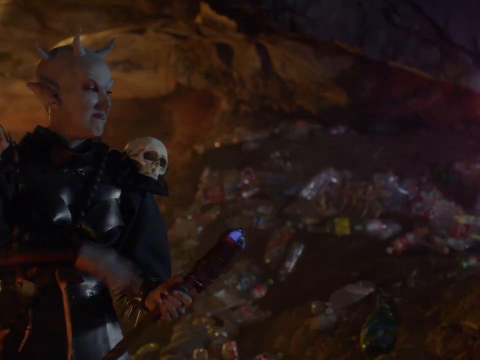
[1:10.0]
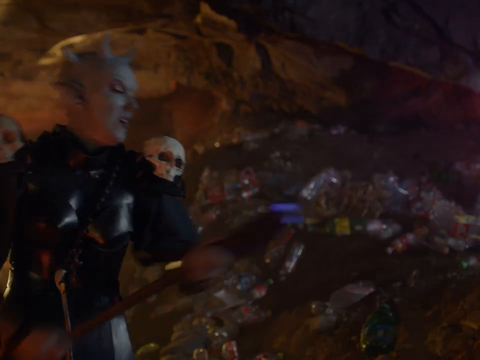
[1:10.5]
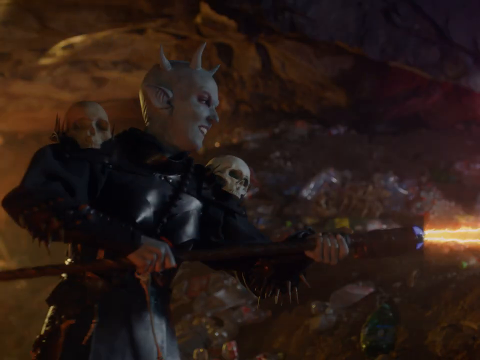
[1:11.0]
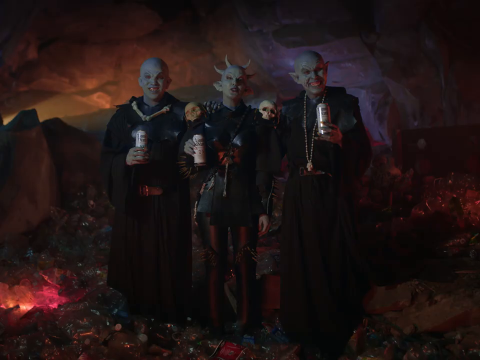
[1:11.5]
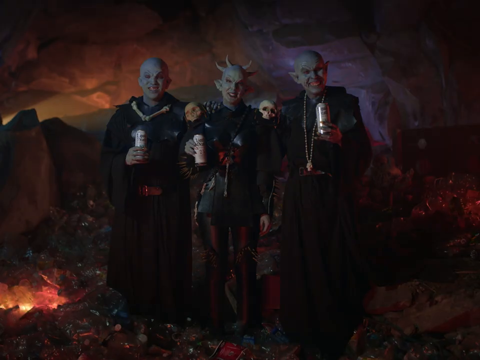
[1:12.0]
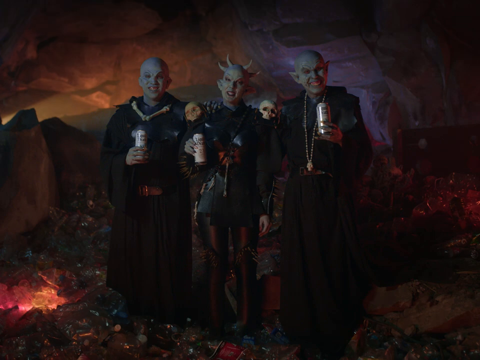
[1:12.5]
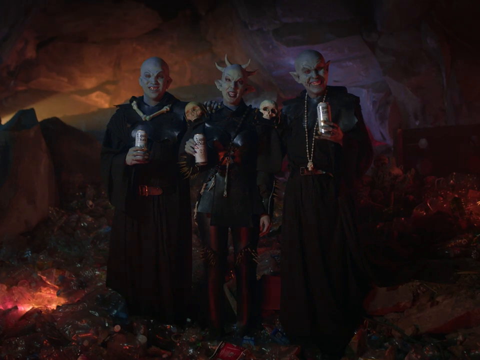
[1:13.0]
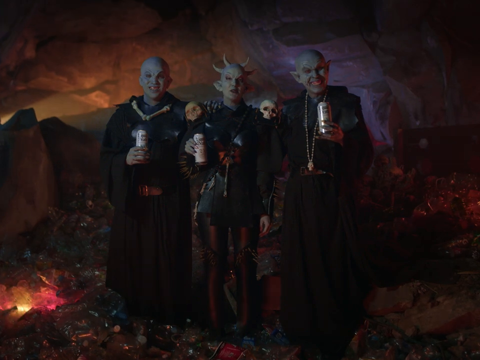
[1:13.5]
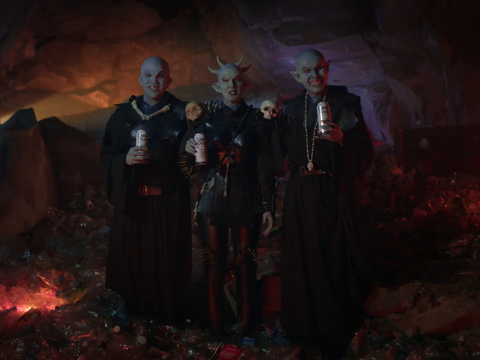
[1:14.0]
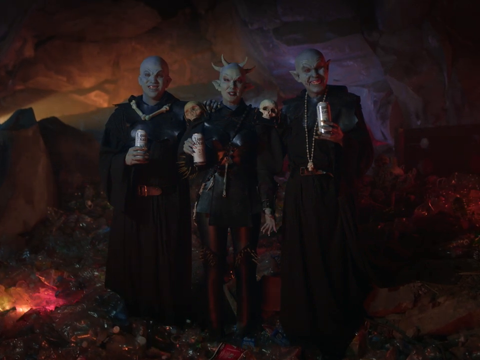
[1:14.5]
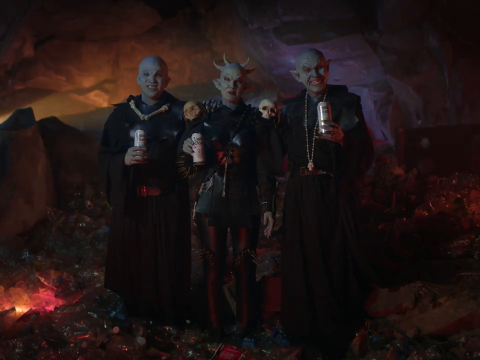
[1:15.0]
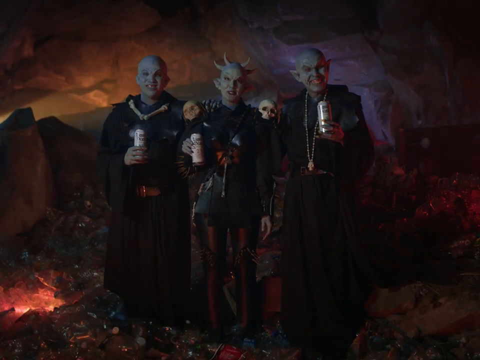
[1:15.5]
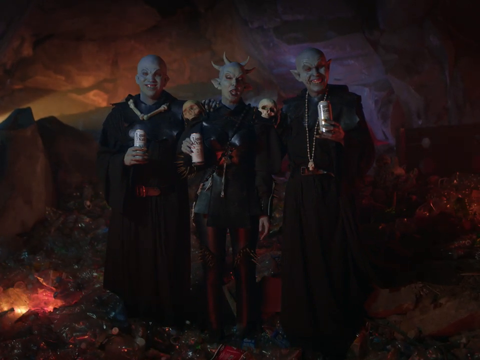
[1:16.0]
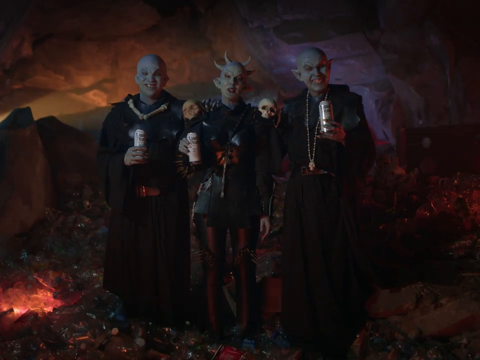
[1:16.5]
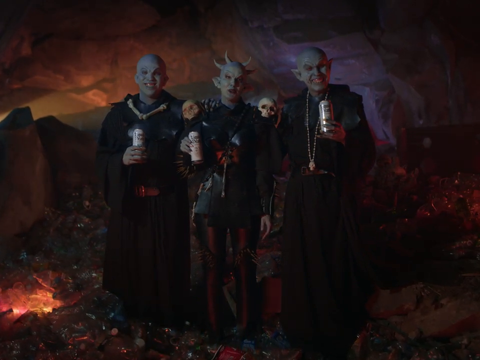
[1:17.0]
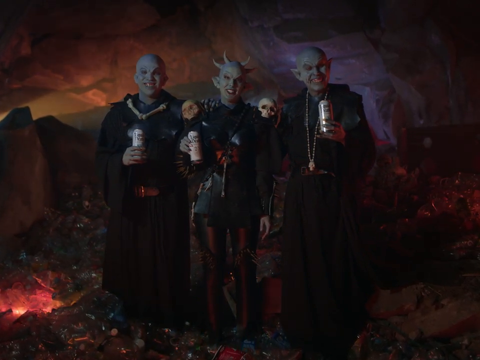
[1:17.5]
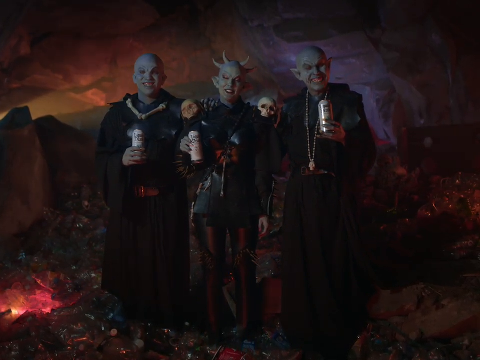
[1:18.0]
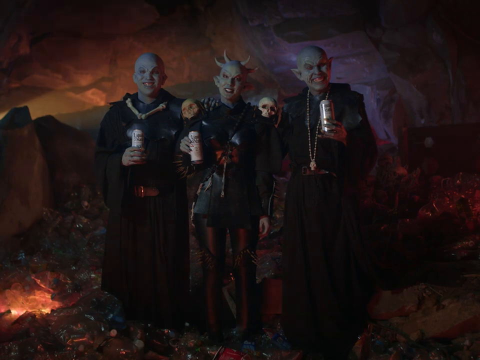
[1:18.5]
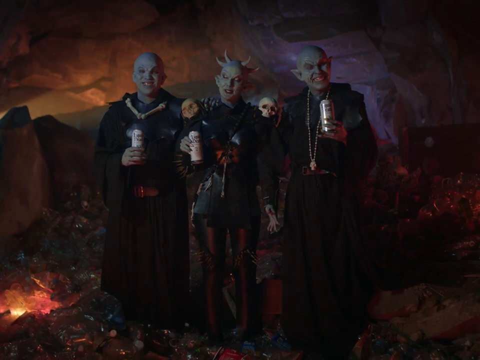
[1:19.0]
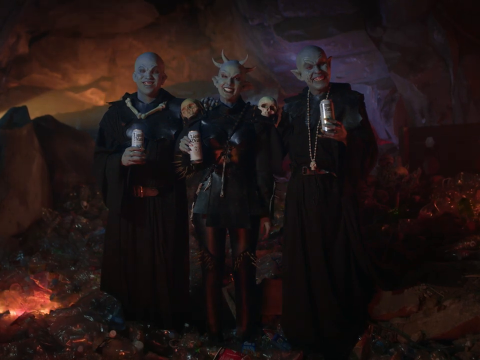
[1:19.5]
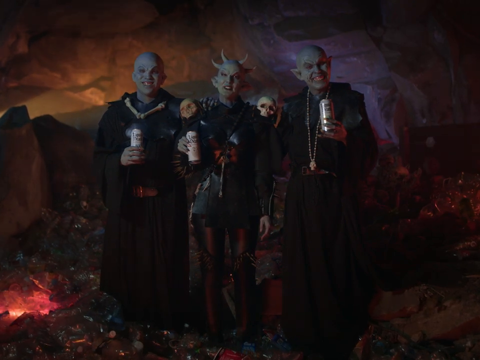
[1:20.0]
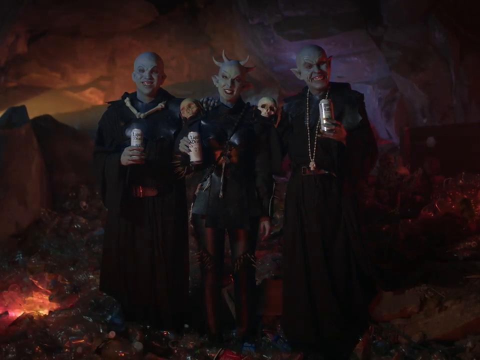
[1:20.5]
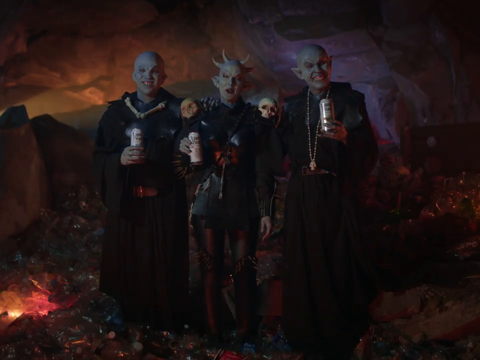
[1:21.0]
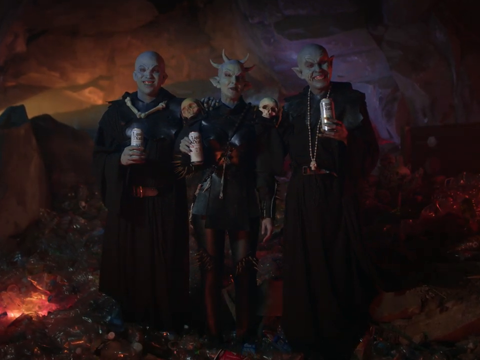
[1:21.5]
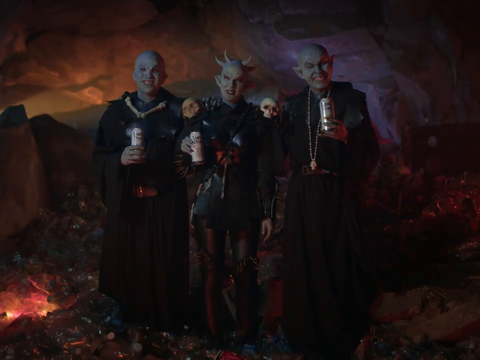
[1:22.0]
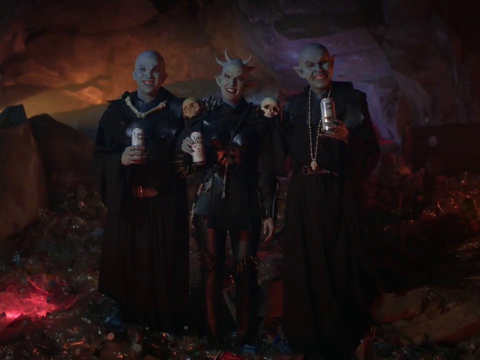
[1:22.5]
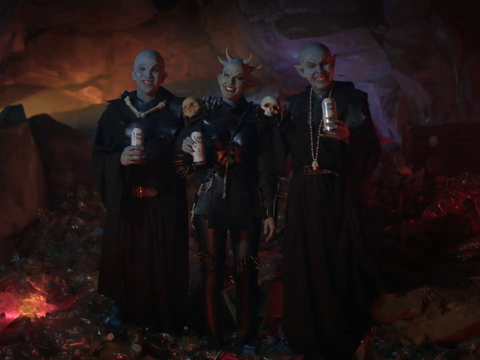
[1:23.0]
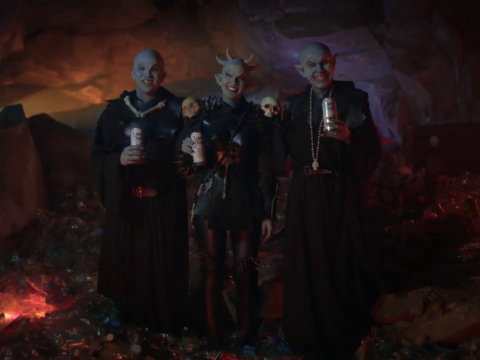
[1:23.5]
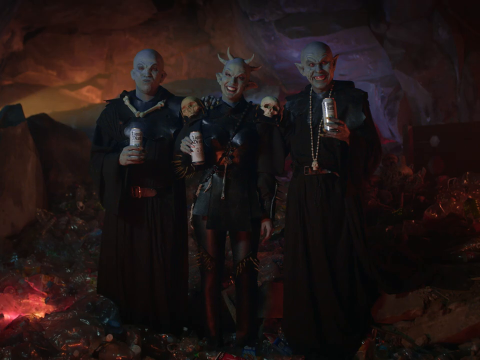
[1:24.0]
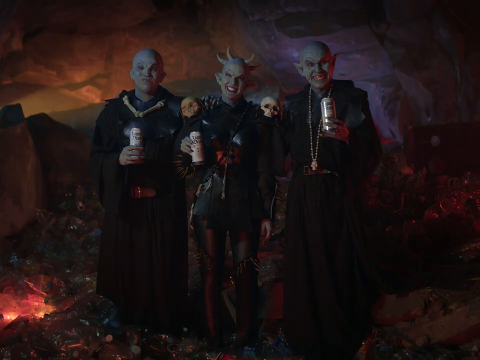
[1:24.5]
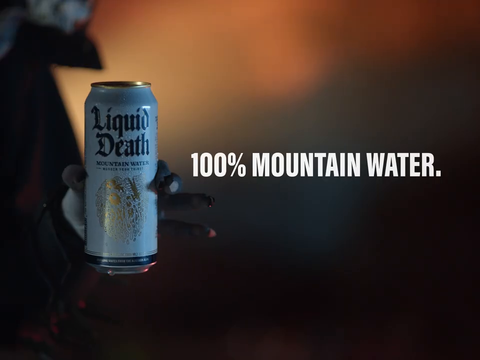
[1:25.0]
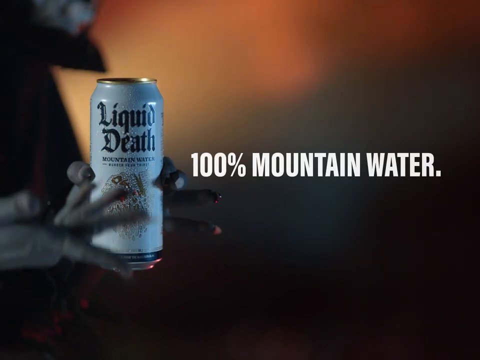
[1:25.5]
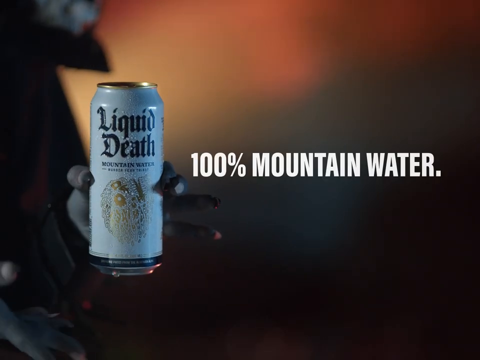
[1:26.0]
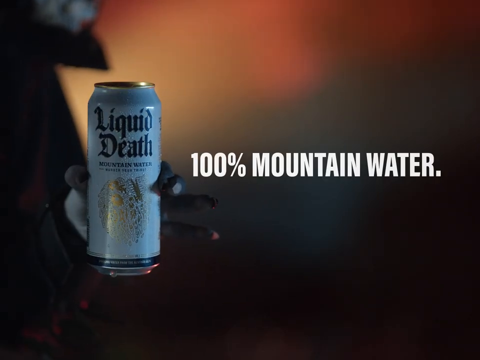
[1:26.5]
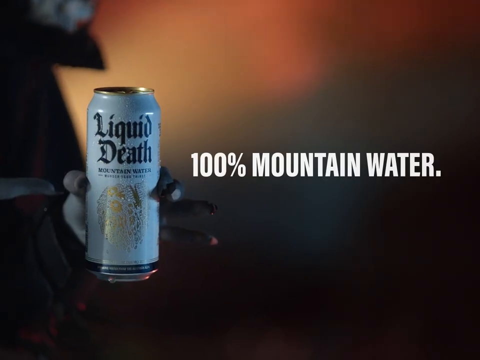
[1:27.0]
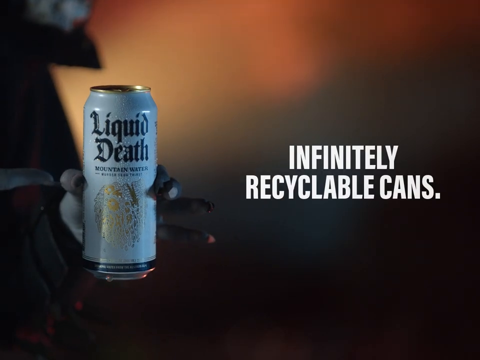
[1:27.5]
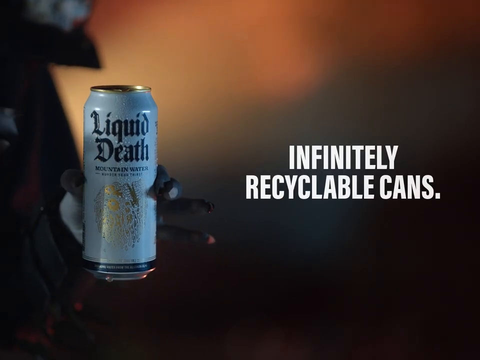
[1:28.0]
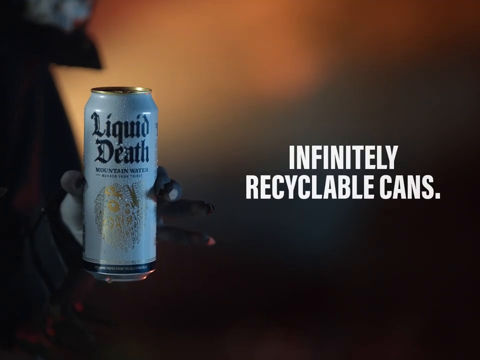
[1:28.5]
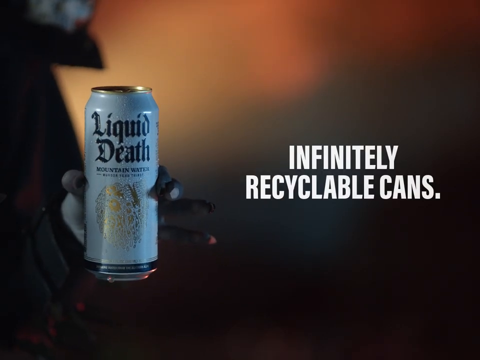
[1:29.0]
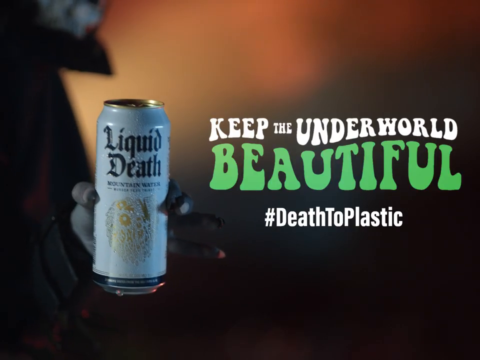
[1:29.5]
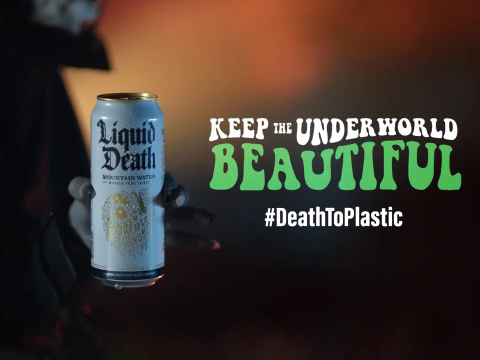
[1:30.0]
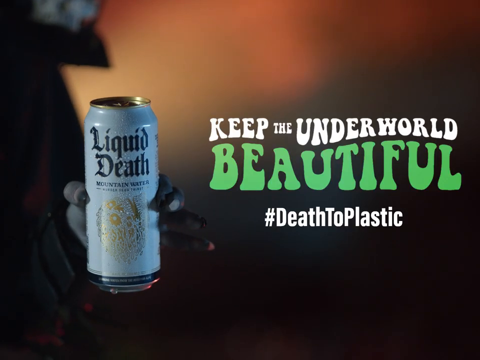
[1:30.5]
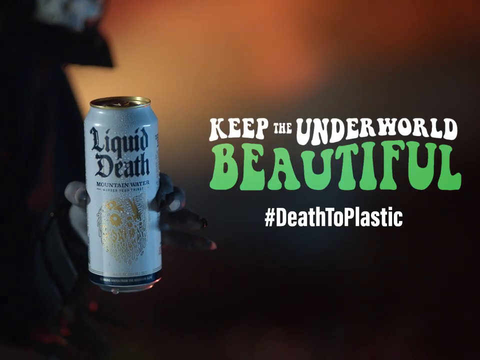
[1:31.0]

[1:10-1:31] The interaction between the alien and the two people on the ground continues. The alien picks up the staff again and shoots a quick bolt in the direction of the people. The video cuts to the aliens standing inside the cave among the plastic bottles. Each holds a tin can that looks almost like a 500 ml or 440 ml can. The female-looking alien is in the middle, with two male-looking aliens wearing black cloaks on either side of her, and they smile at the camera holding the drink. The lady in the middle and the man to her right hold the drink in their right hands, and the one to her left holds it in his left hand. He also has a very long chain around his neck that goes all the way down to his belly, with what looks like a skull attached at the bottom. The drink looks like a whitish tin can. The lady alien speaks at the camera. The video then cuts to a close-up of an alien hand holding the tin, now clearly a white tin can. On it in black is "liquid death", and below that in smaller letters "mountain water", with a small golden-ish picture on the front that is hard to make out. To the right of the can, in white all-caps letters, is "100% mountain water".